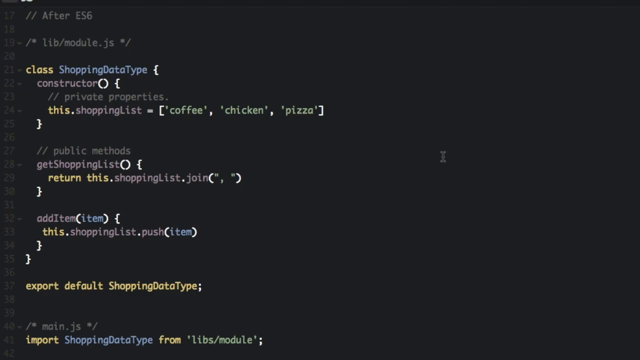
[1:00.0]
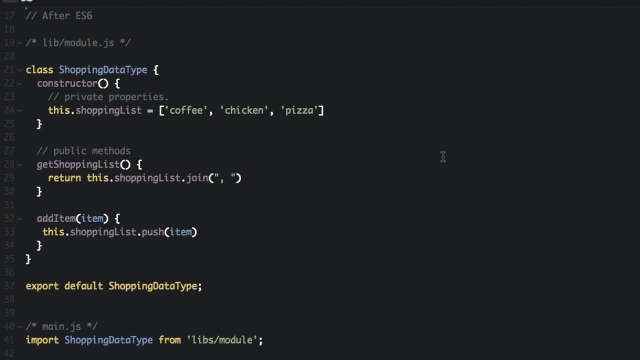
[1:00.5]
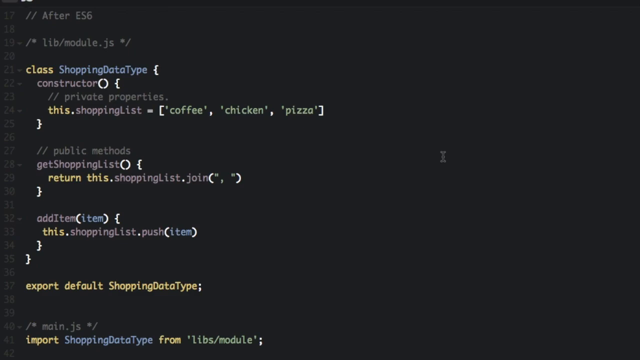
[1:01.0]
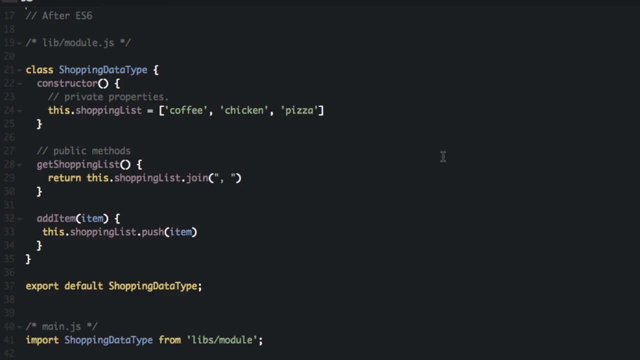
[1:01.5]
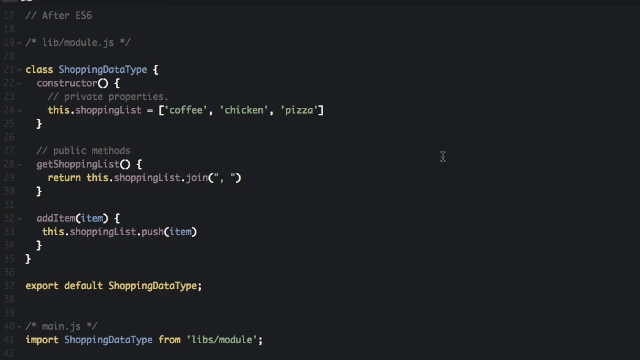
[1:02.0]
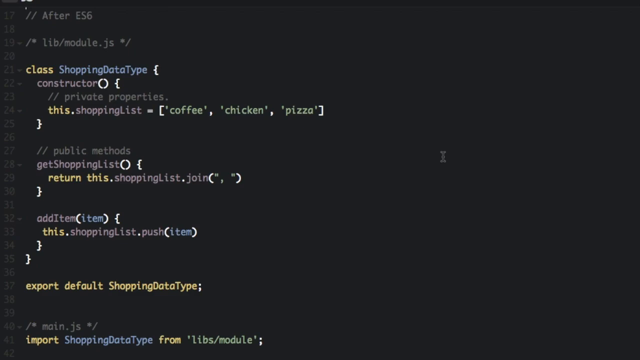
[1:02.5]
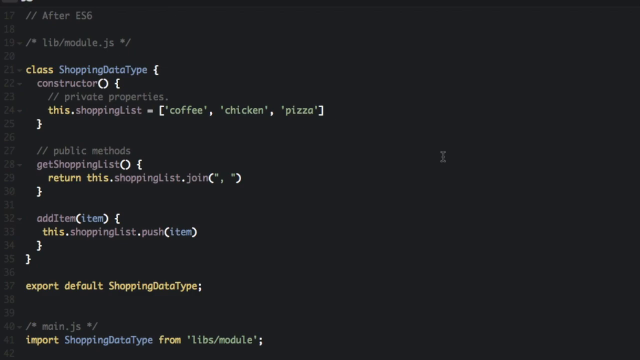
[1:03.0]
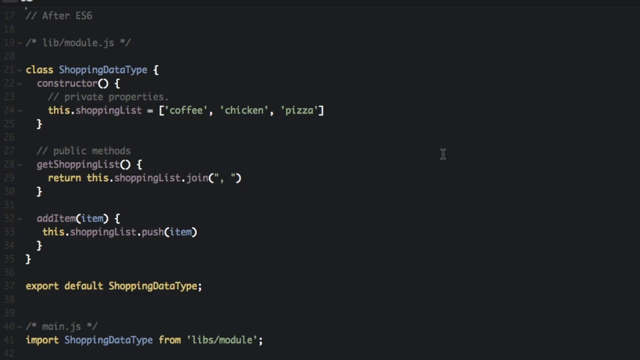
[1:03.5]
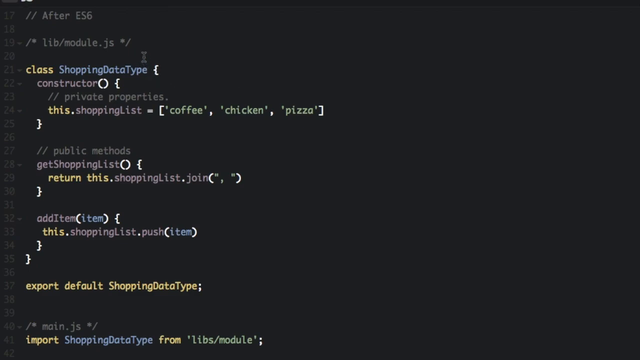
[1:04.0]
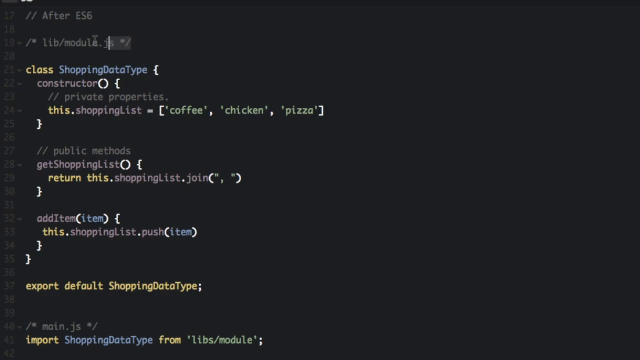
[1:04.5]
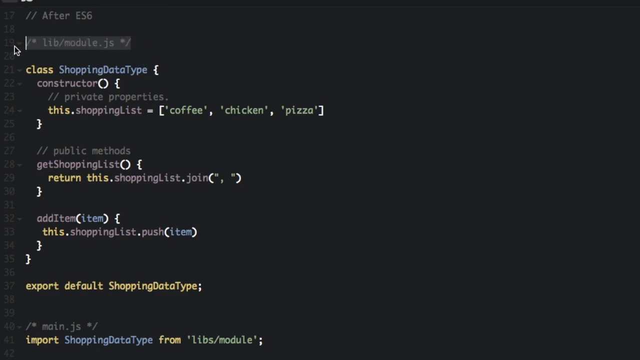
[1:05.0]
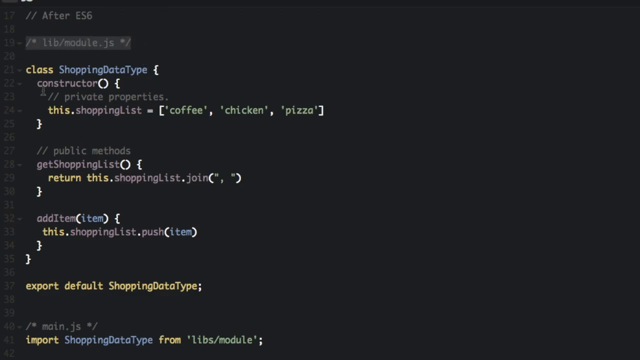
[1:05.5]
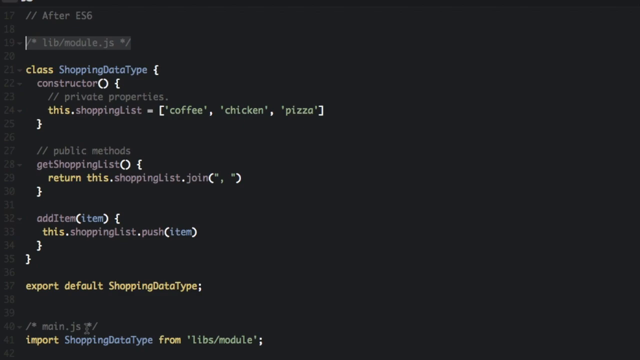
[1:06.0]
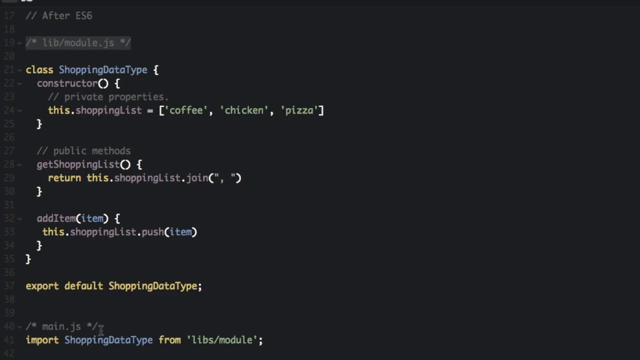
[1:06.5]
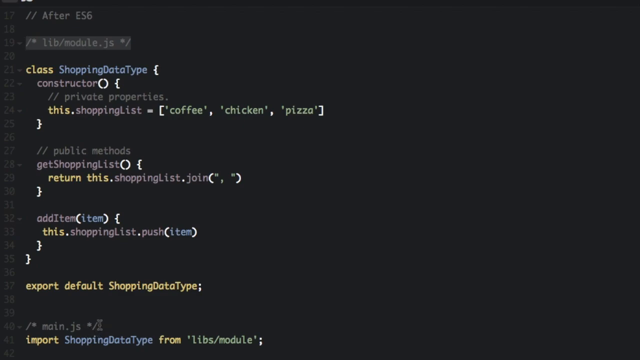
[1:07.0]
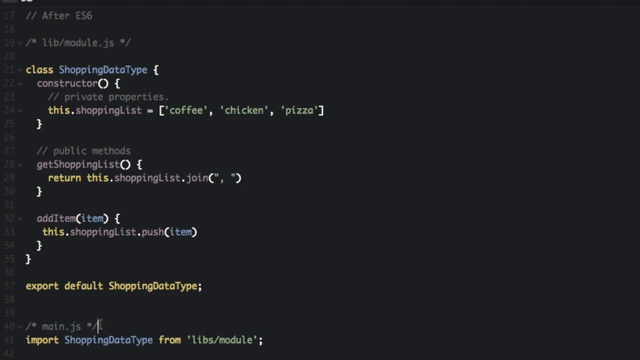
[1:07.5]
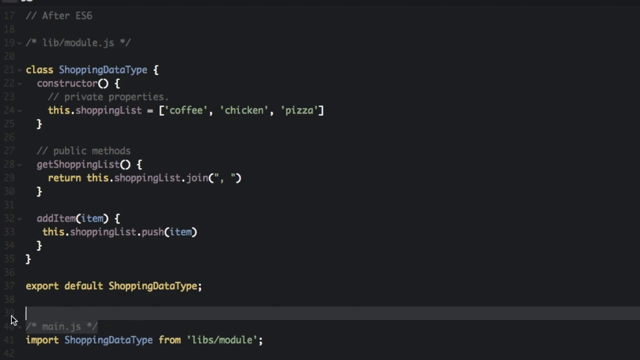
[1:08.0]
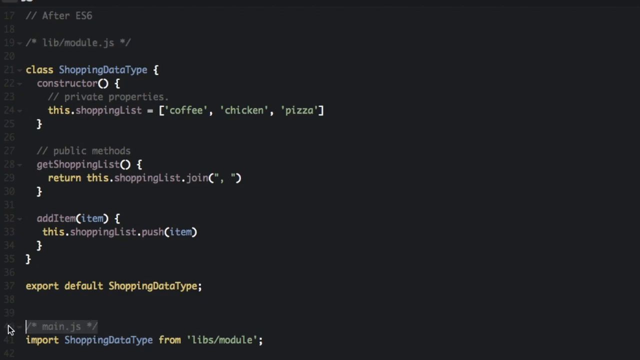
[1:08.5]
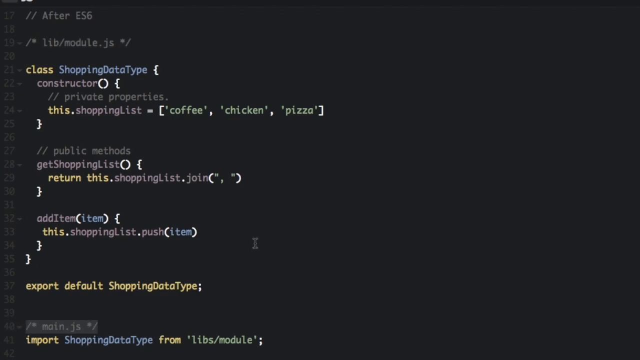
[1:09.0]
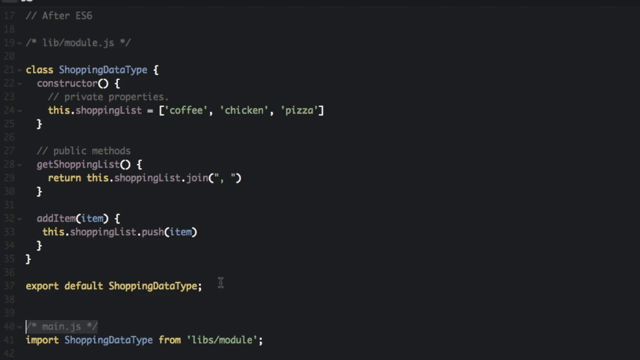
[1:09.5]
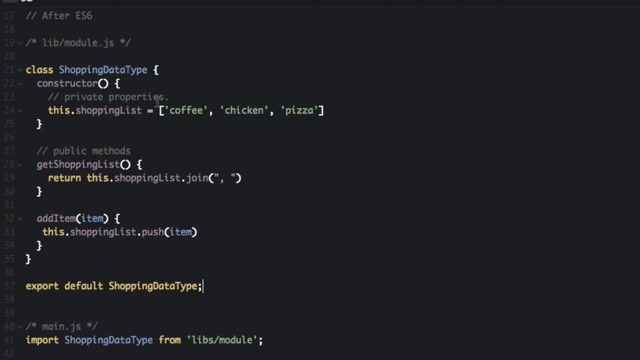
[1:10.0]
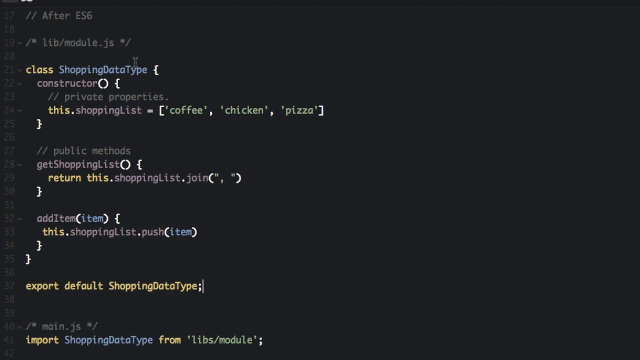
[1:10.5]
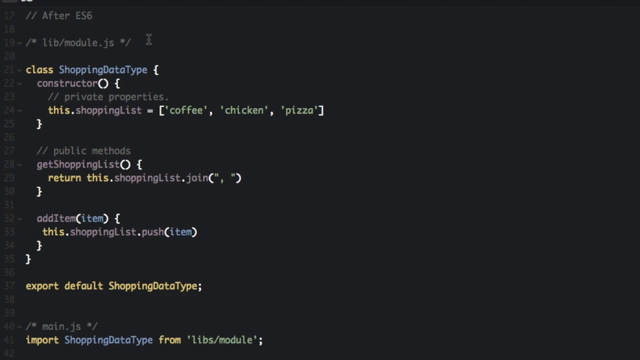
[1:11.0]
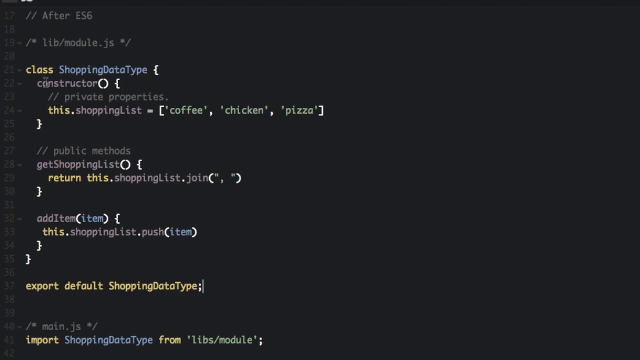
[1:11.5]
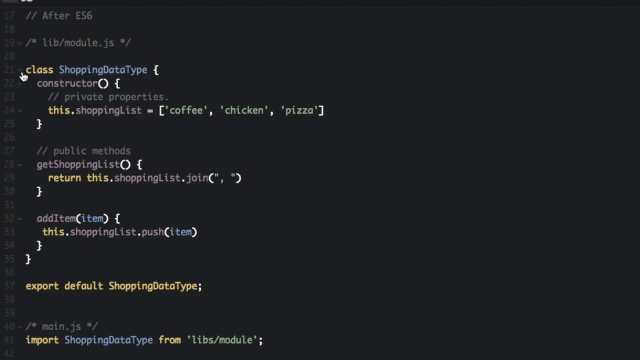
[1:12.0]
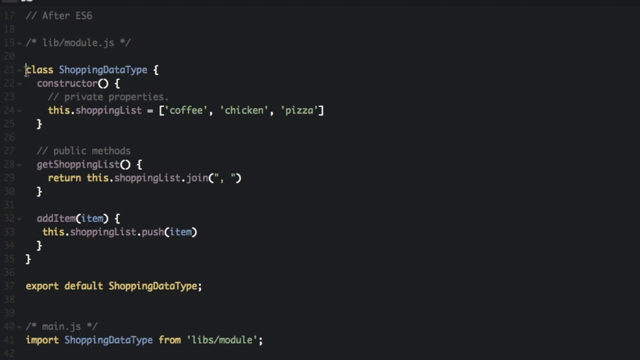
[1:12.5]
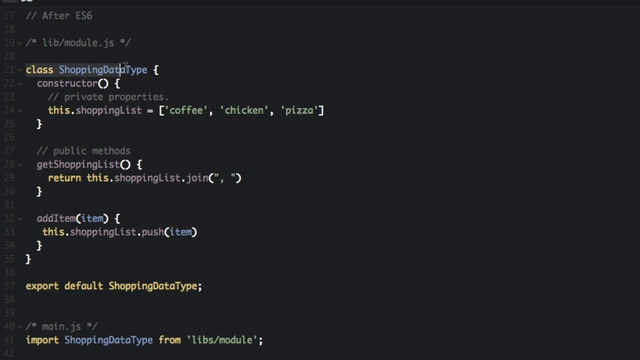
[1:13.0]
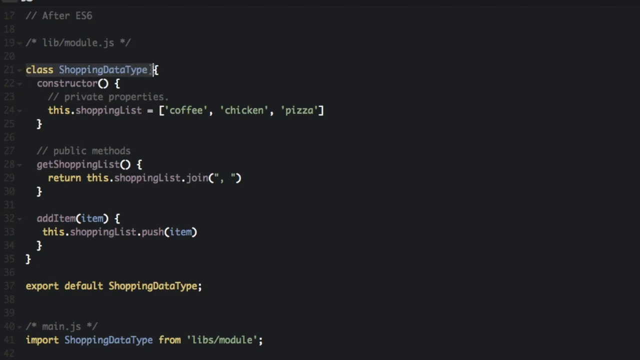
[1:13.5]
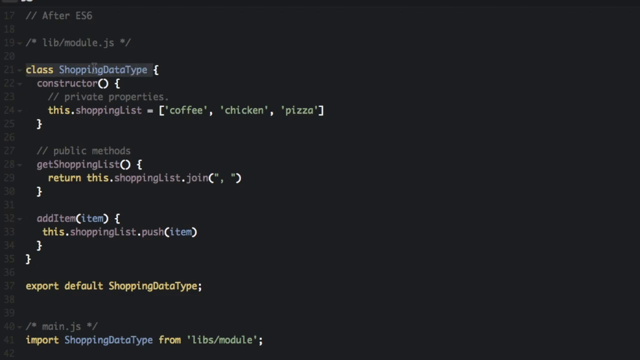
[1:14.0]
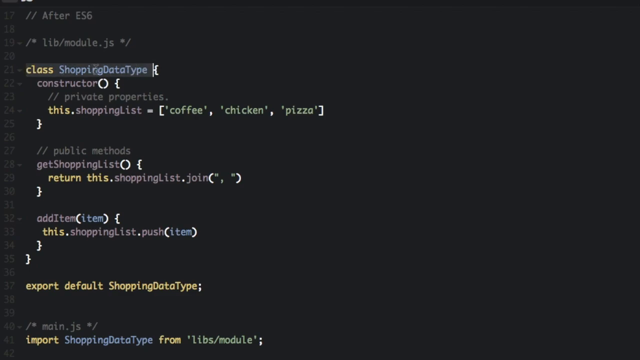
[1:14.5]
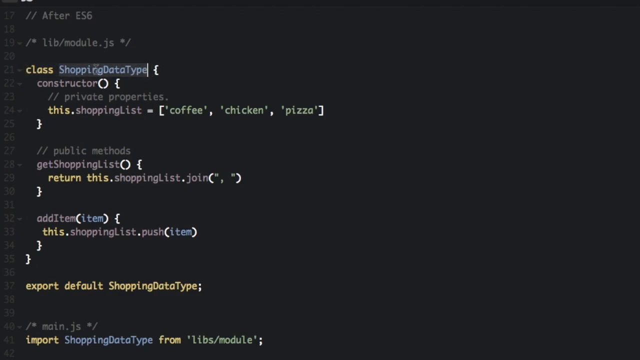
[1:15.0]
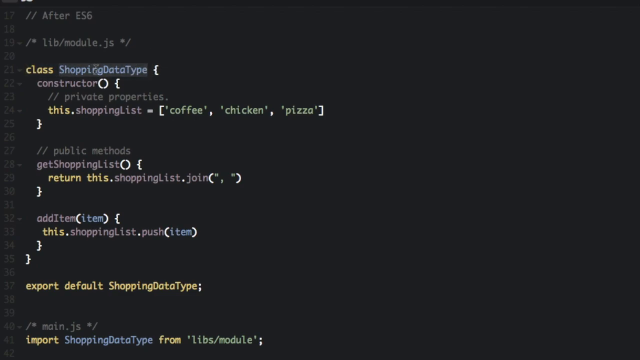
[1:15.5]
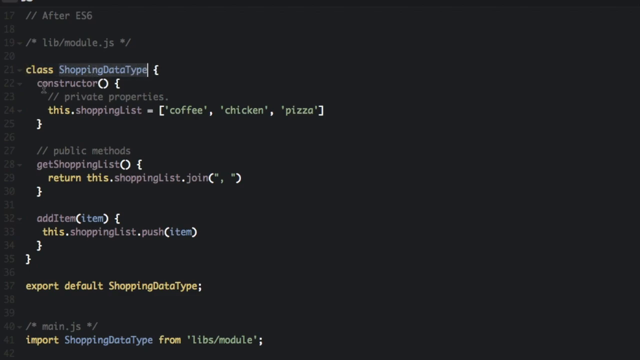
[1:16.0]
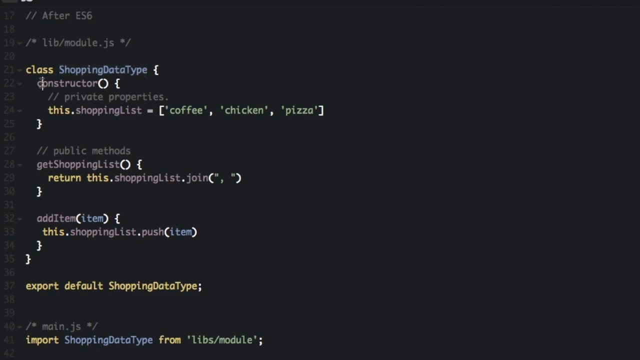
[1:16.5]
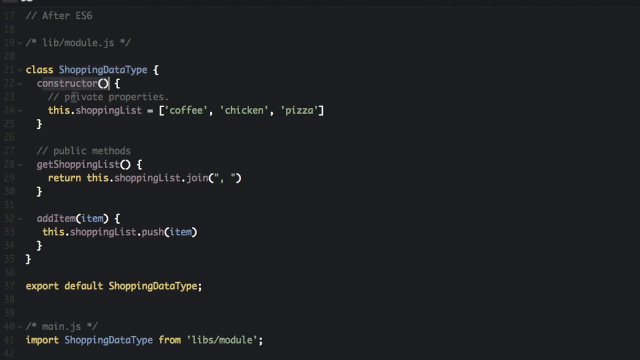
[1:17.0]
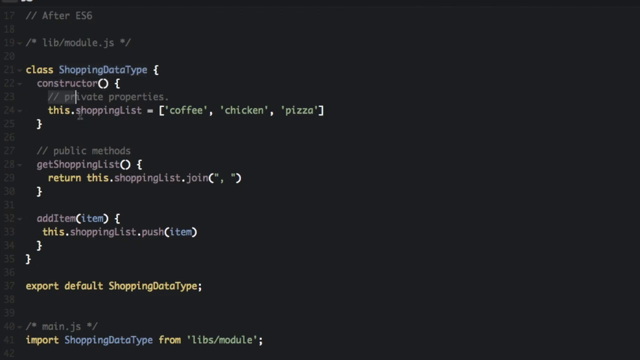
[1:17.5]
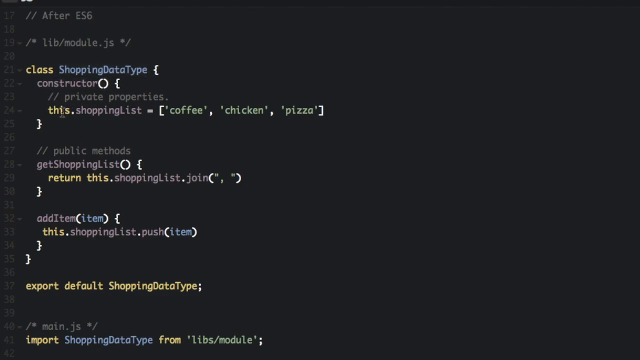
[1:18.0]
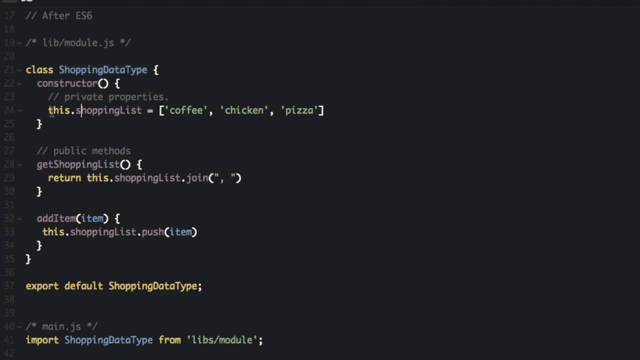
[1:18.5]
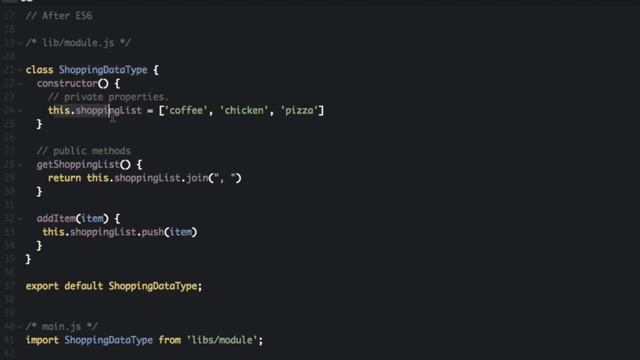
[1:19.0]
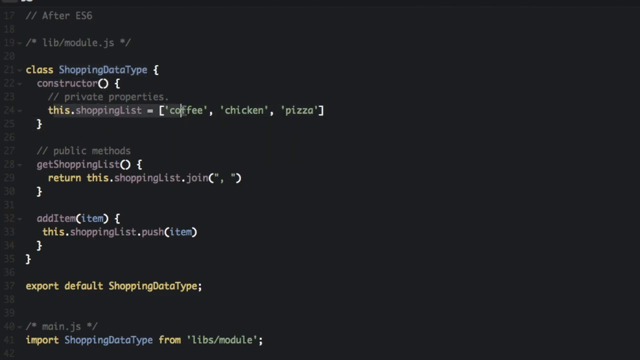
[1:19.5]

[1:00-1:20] Line 17 has two forward slashes, a space, a word beginning with a capital A, a space, and "ES6", all in gray lettering. Beneath it, line 19 reads "/* lib/module.js */" in lowercase letters, with the final forward slash in gray. Line 21 has the word "class" in yellow, then after a space the words Shopping, Data and Type, each with a capital first letter, followed by another space and a white open parenthesis-style mark, really a colon. Faded downward arrows appear to the right of the line numbers on lines 19, 21, 22, 24, 28 and 32; they are faded but still visible, in basically the same font and color as the line numbers.